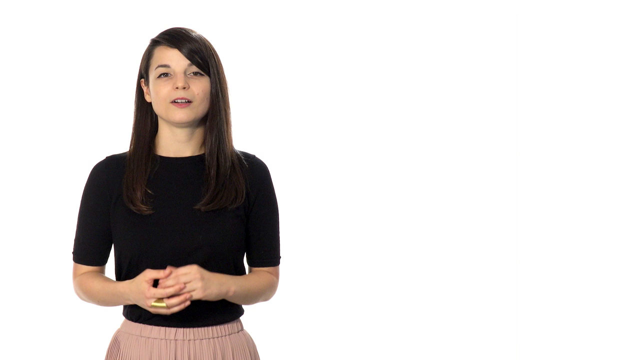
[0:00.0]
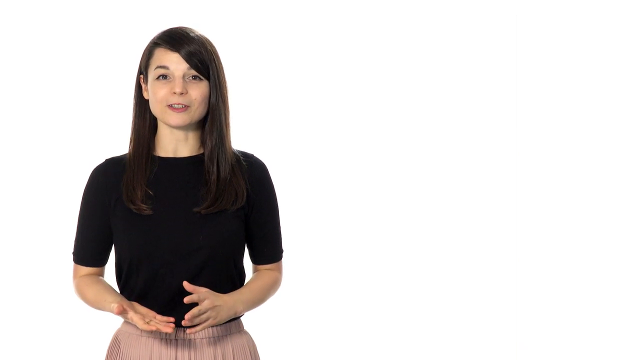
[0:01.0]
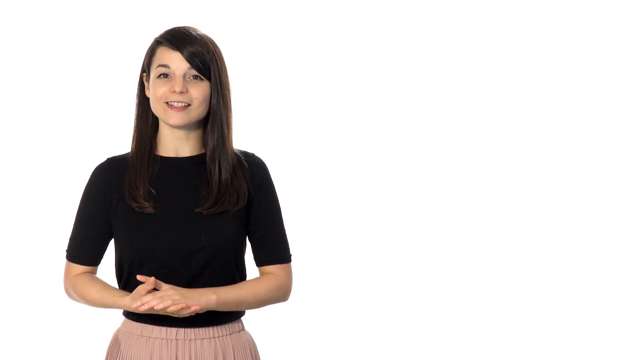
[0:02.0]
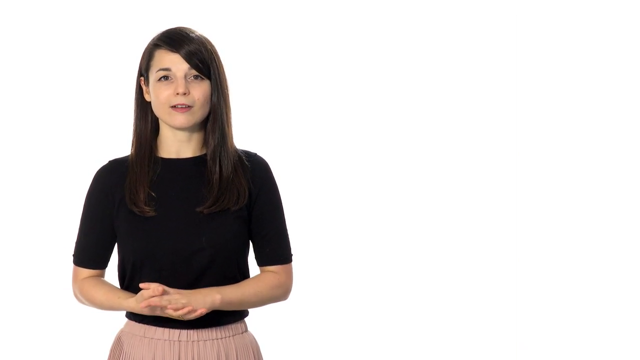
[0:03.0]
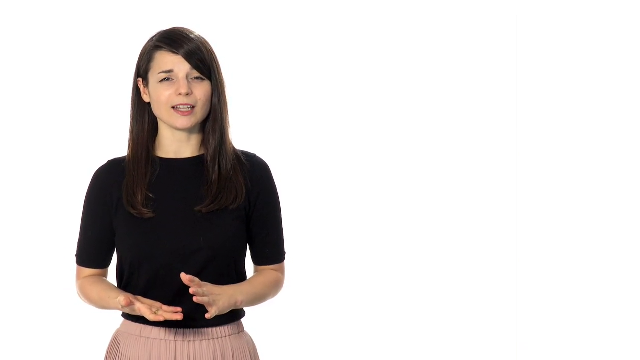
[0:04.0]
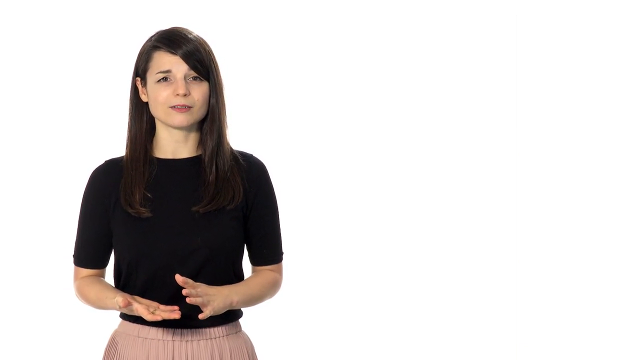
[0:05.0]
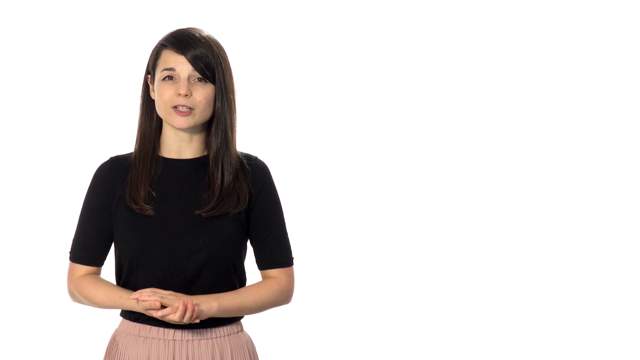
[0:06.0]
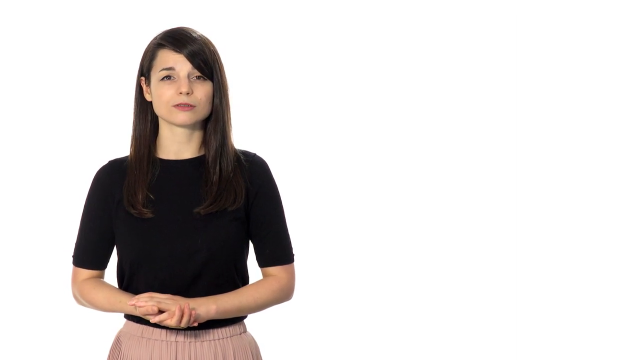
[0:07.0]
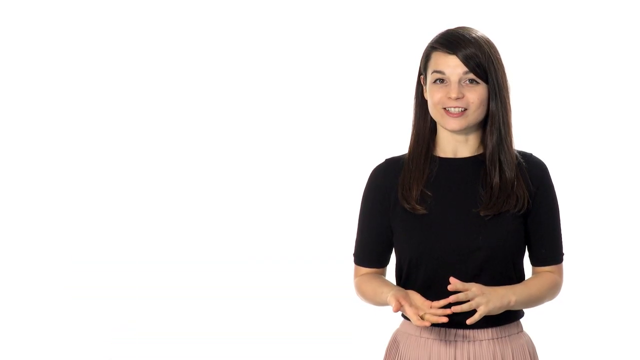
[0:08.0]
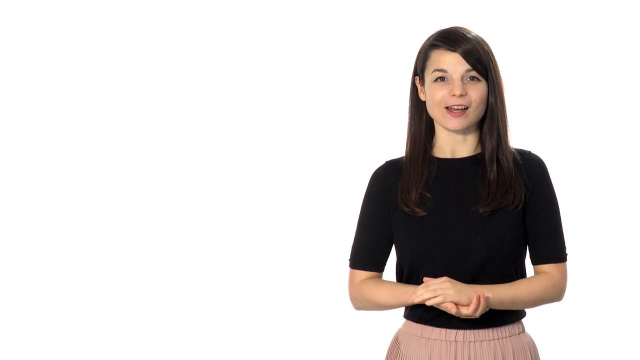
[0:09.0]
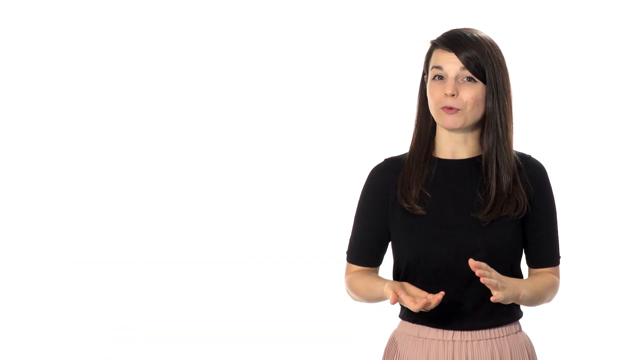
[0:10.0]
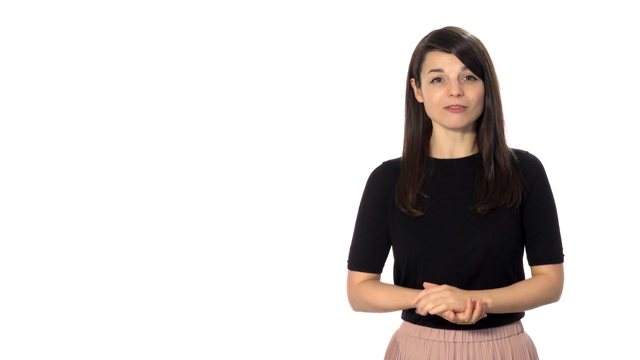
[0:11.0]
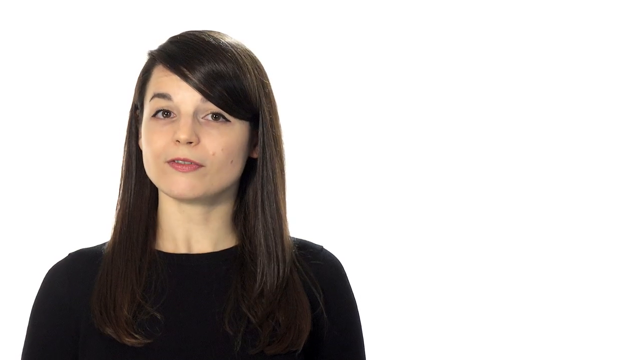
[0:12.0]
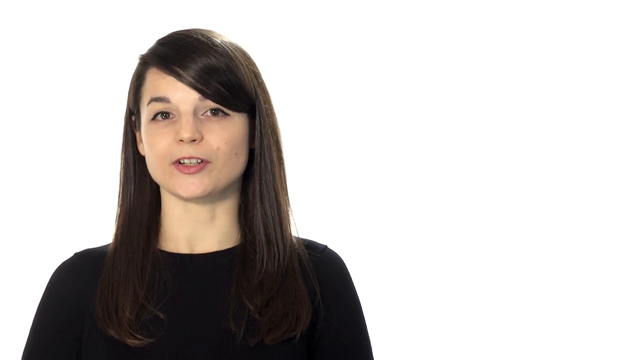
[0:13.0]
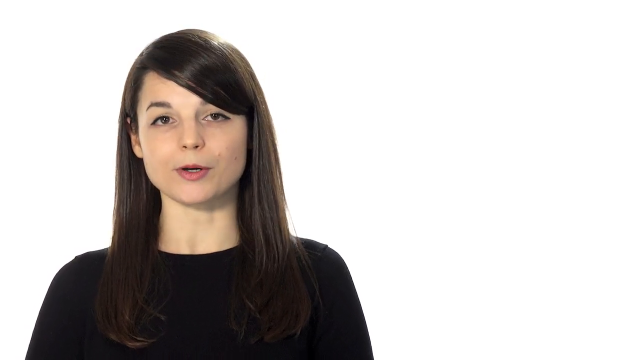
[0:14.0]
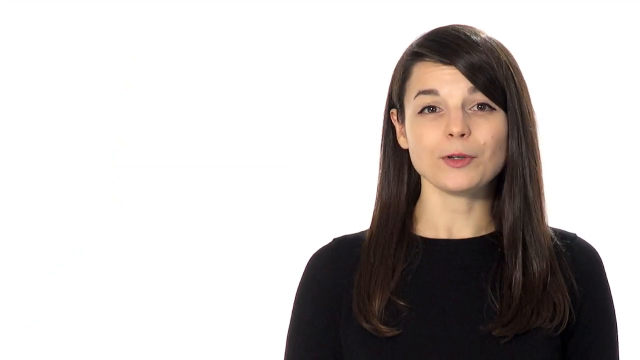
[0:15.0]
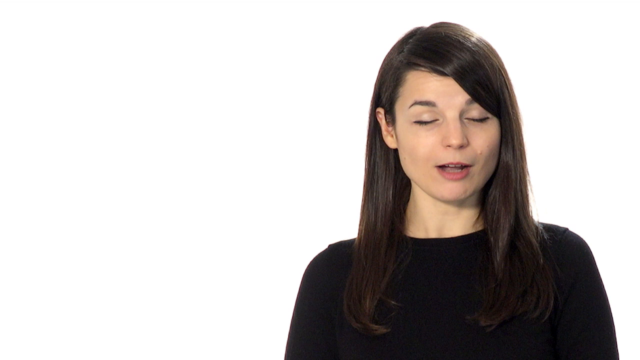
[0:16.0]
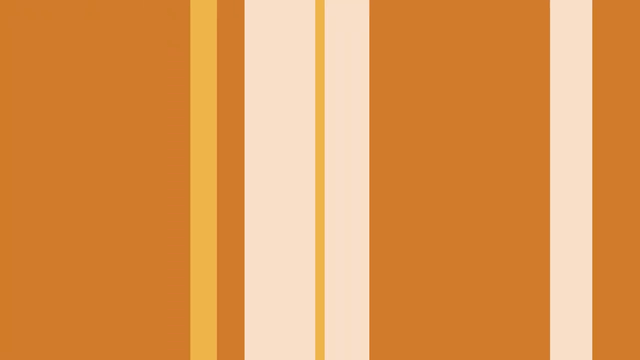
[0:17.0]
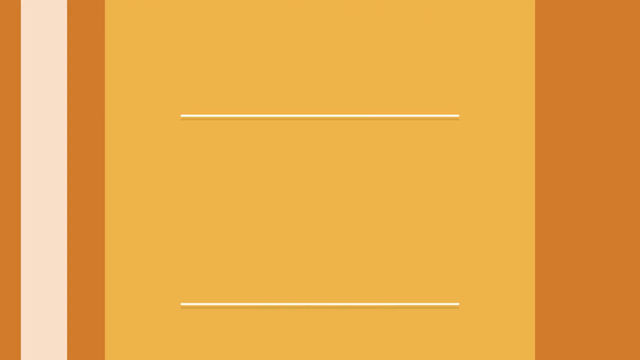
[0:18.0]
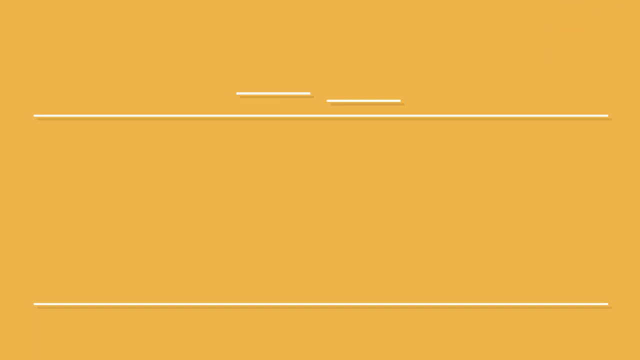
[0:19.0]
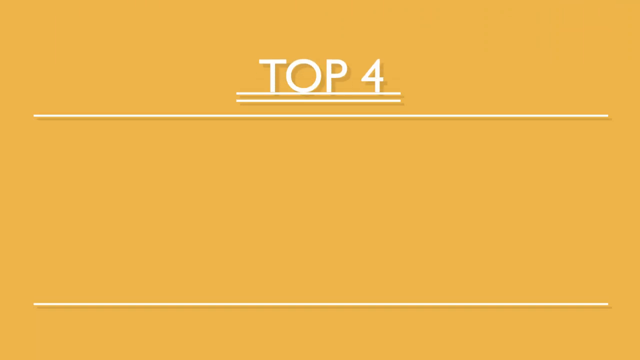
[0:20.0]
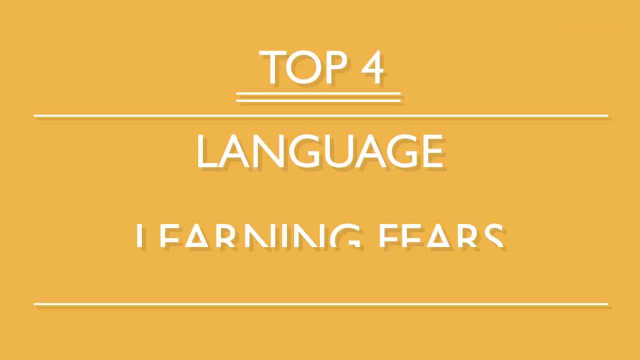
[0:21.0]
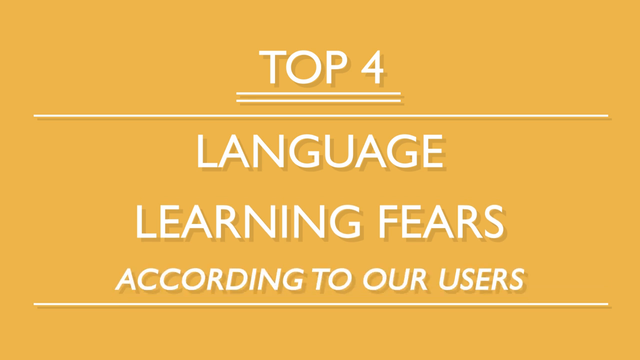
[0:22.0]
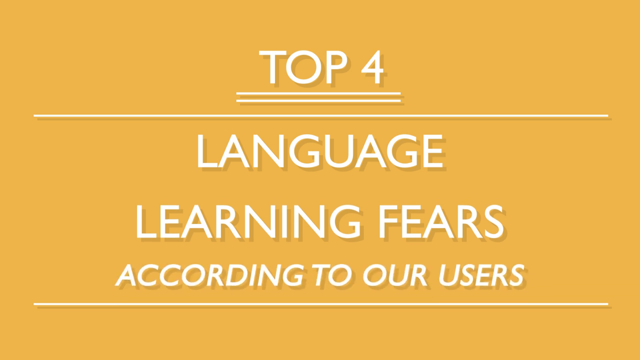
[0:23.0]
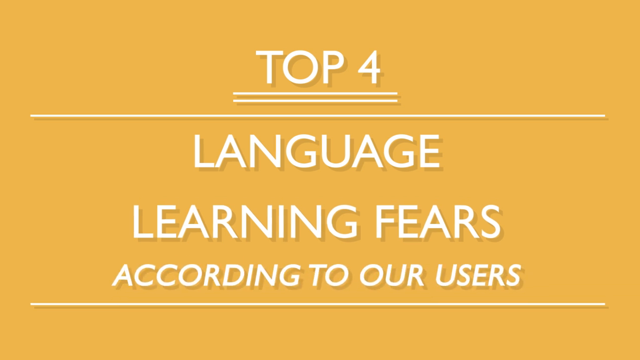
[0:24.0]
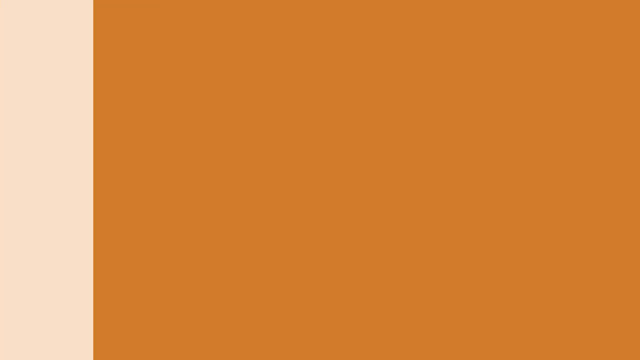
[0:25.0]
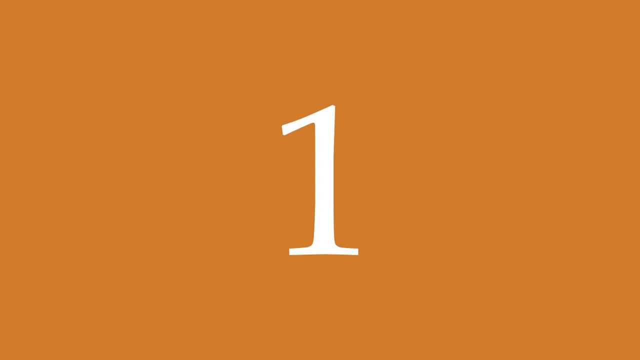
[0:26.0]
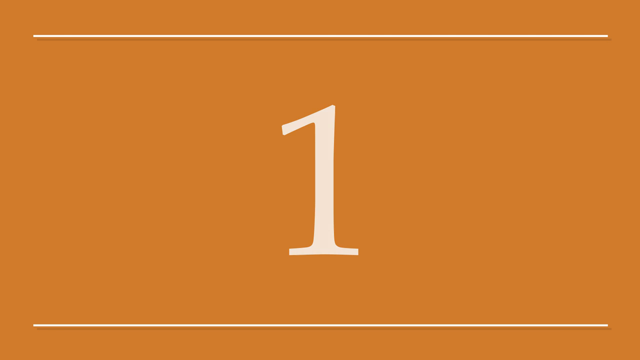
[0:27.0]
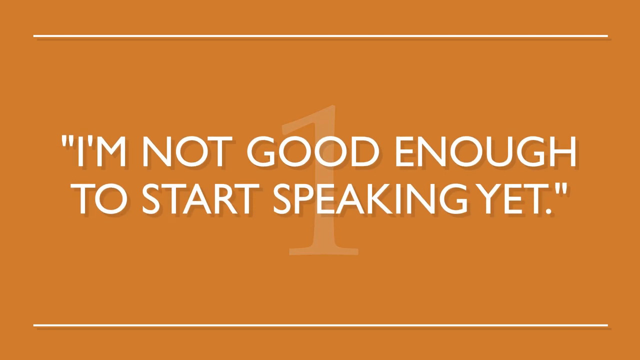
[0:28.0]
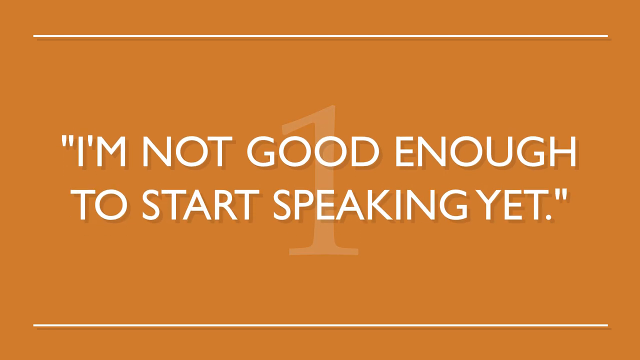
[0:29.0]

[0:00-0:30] The video opens on a white screen with a dark-haired woman standing on the left side of the frame, her hands at her waist, one on top of the other. She talks to the camera, then switches to the other side of the screen. She then switches back, this time in a closer shot showing her head and shoulders as she speaks, making slight movements with her head and face. She then moves back and appears on the right side of the screen again. Orange and white shades sweep across the screen in a transition that opens onto white text on an orange background, the words coming in one by one within their line. The text reads "Top 4 Language Learning Fears According to Our Users." The screen then transitions to a darker orange background with the number 1 at the top, and a quote appears: "I'm not good enough to start speaking yet."